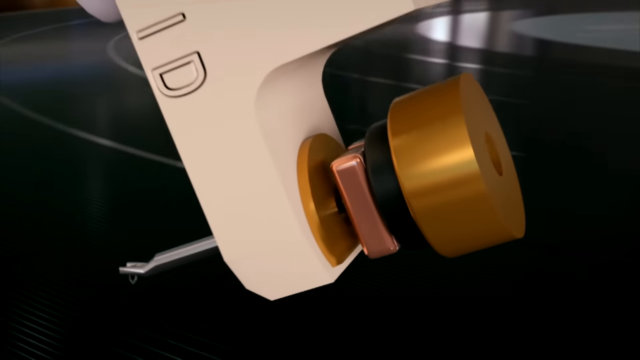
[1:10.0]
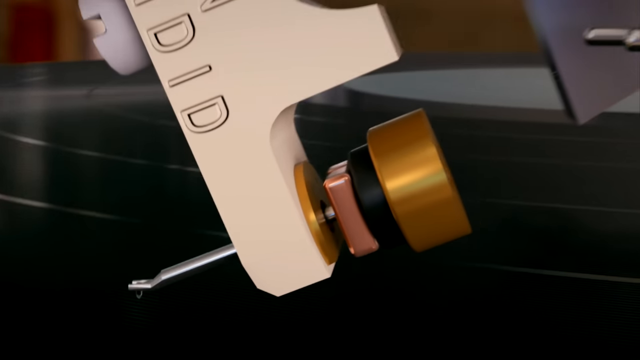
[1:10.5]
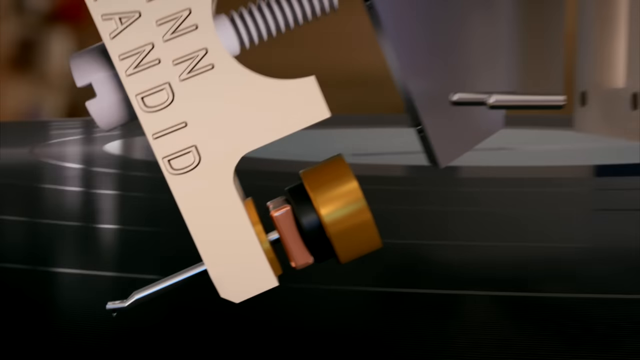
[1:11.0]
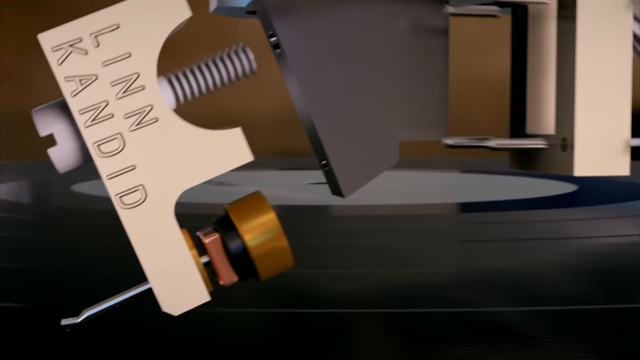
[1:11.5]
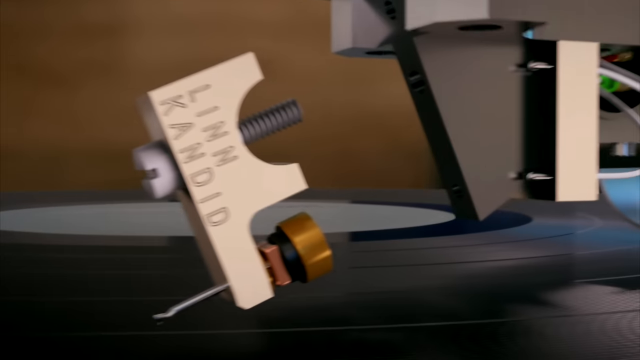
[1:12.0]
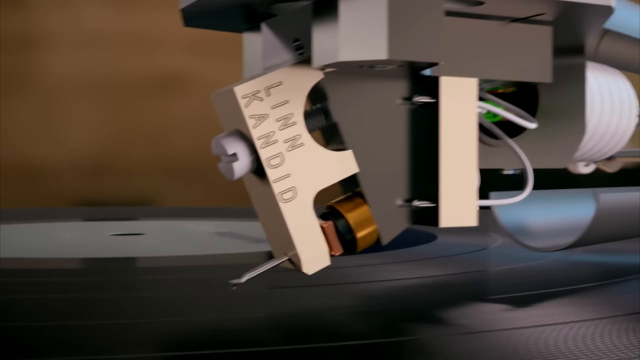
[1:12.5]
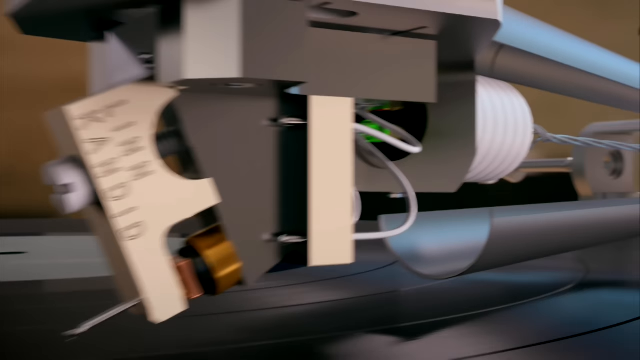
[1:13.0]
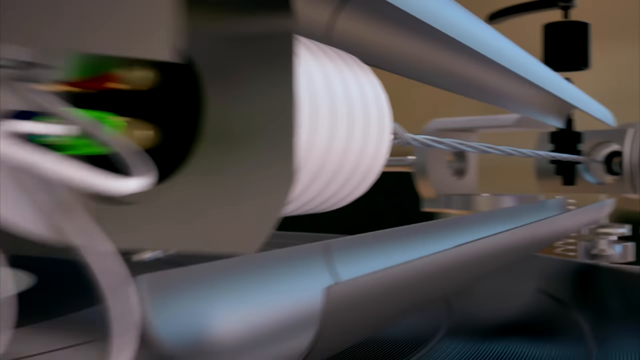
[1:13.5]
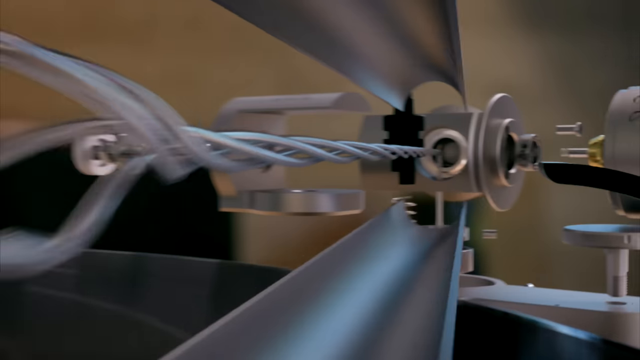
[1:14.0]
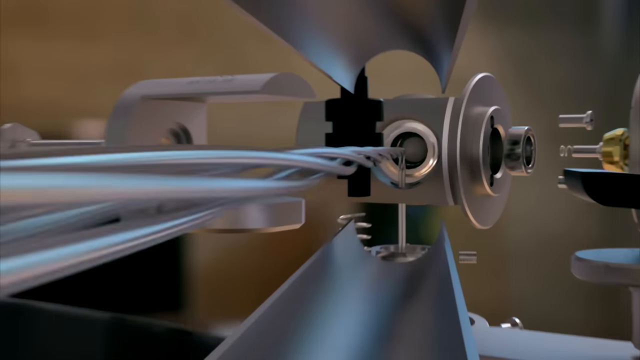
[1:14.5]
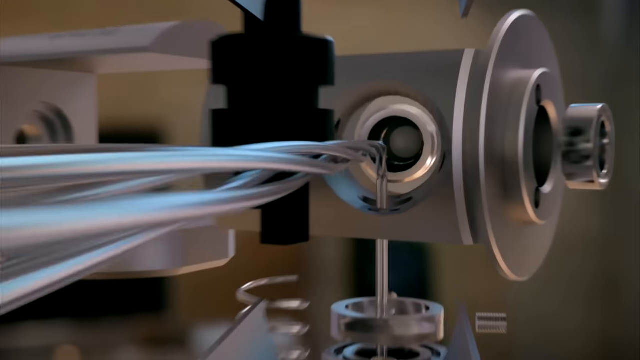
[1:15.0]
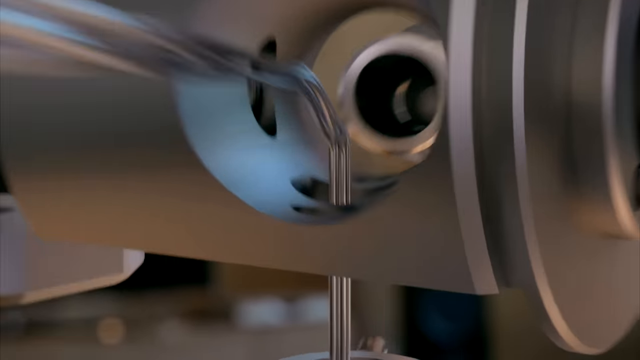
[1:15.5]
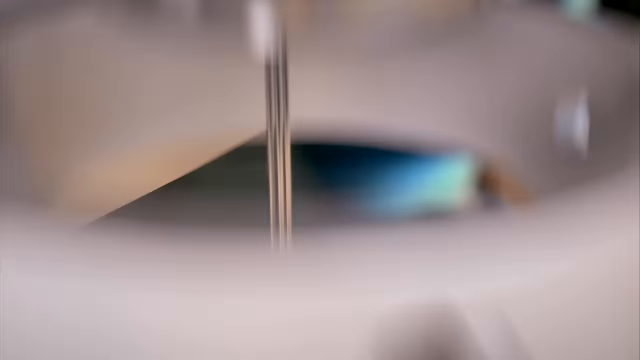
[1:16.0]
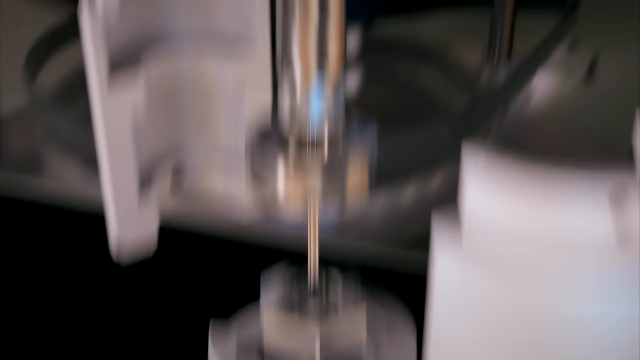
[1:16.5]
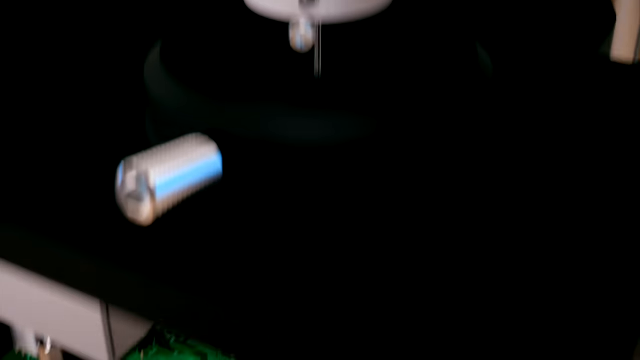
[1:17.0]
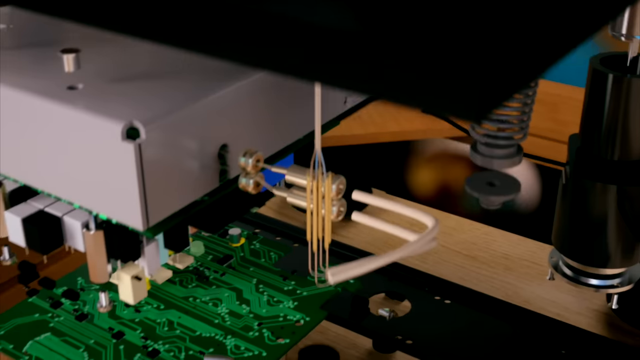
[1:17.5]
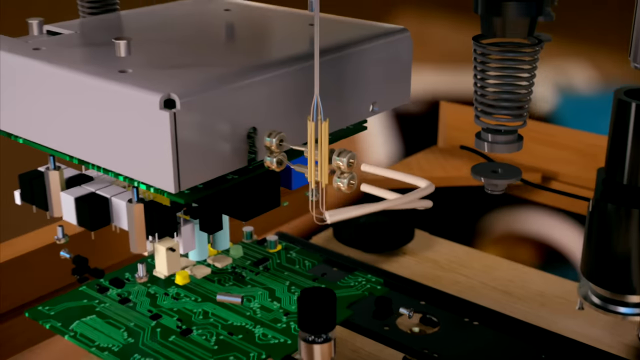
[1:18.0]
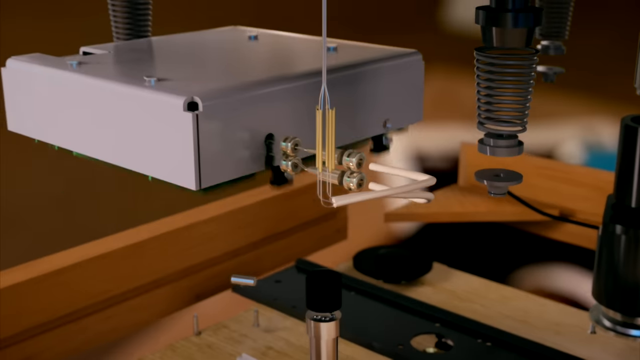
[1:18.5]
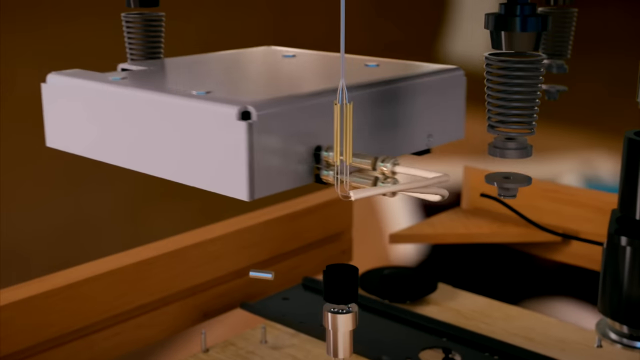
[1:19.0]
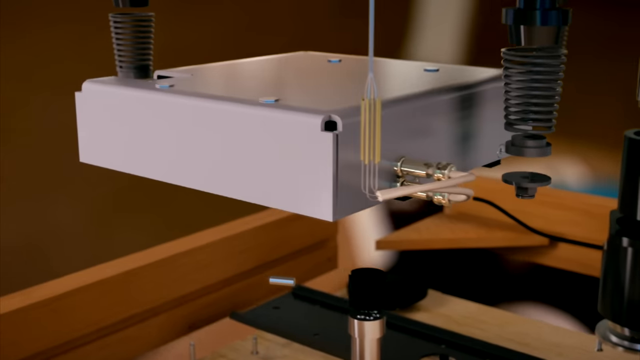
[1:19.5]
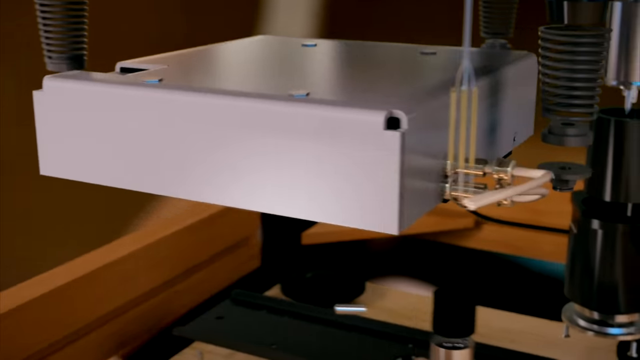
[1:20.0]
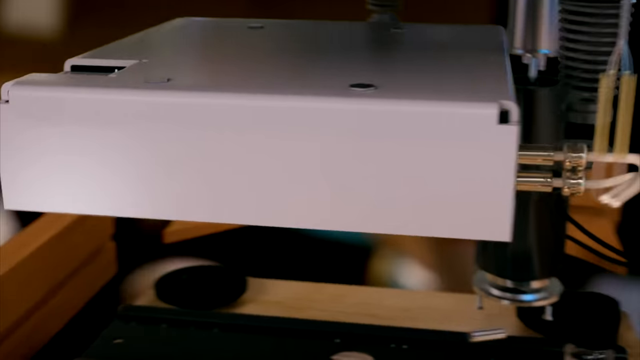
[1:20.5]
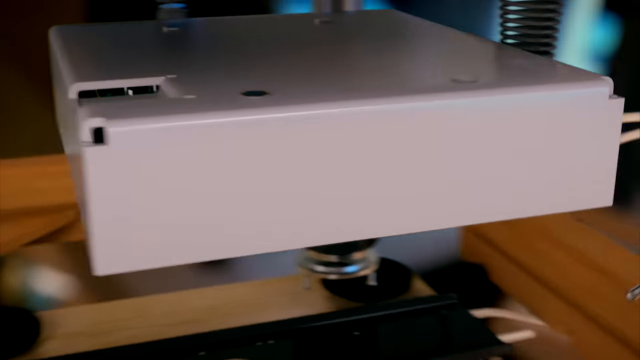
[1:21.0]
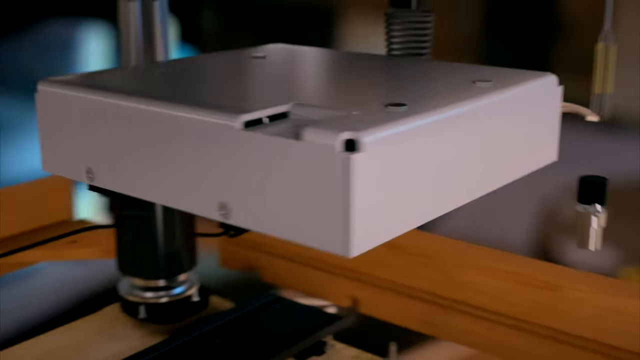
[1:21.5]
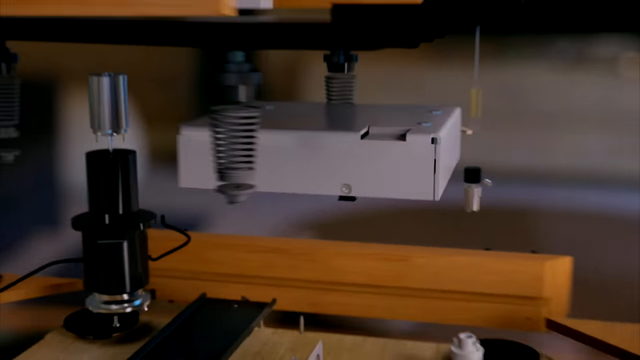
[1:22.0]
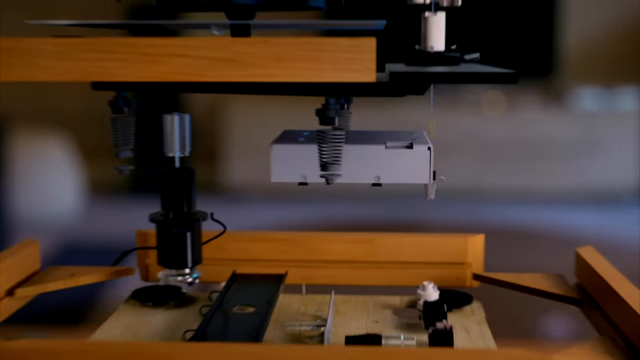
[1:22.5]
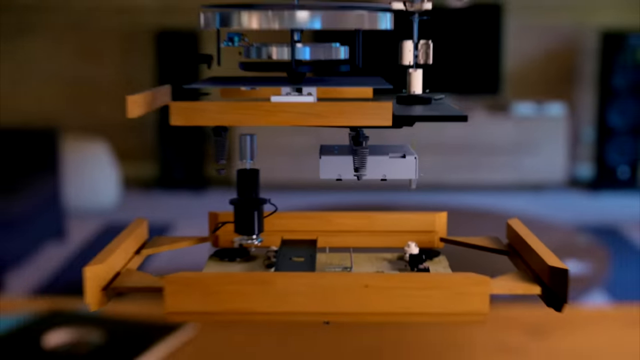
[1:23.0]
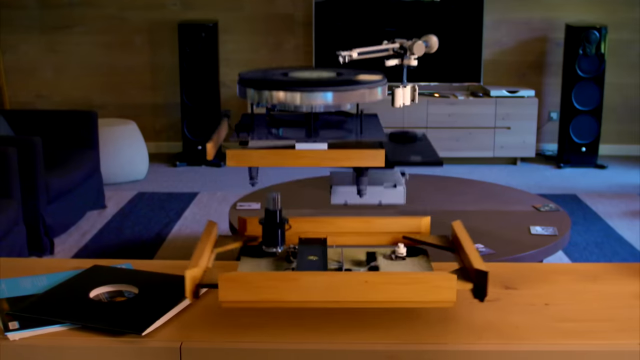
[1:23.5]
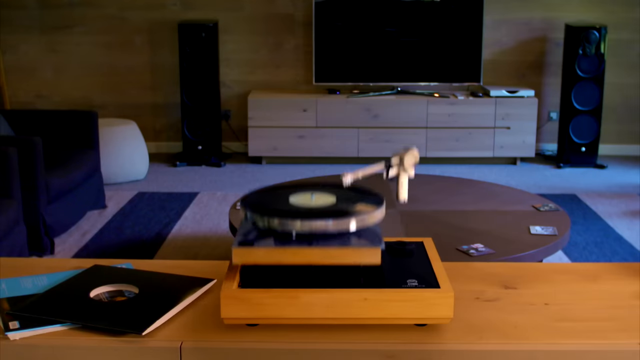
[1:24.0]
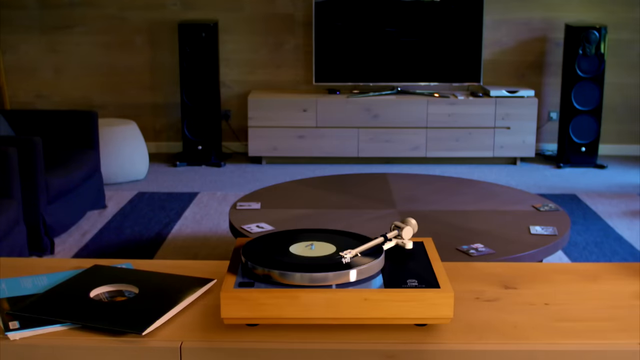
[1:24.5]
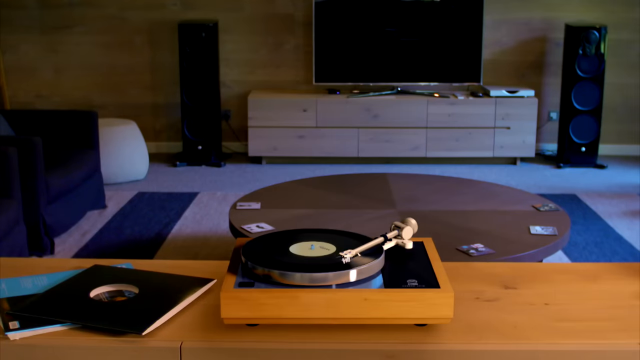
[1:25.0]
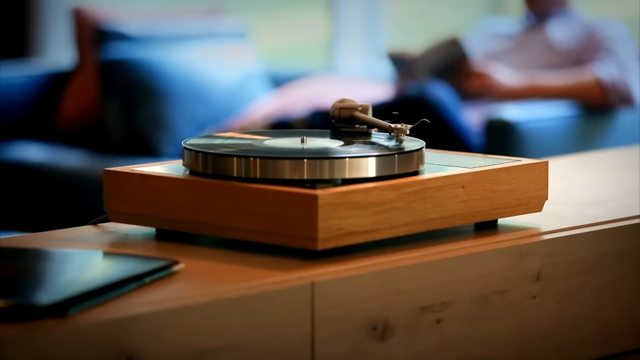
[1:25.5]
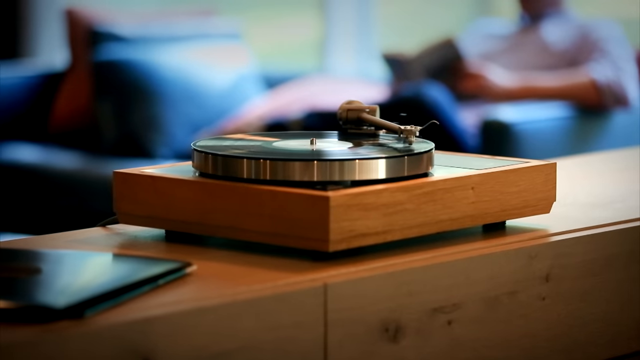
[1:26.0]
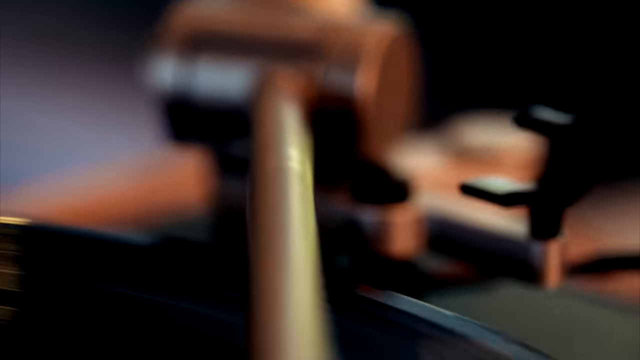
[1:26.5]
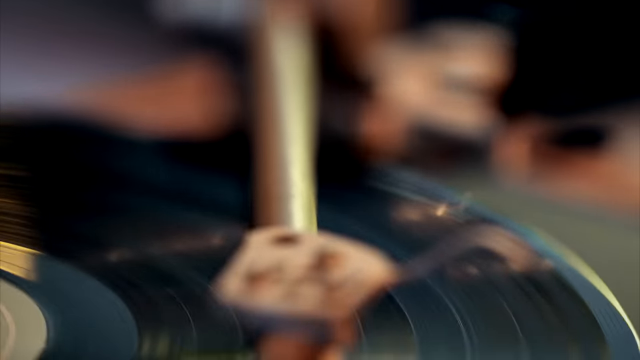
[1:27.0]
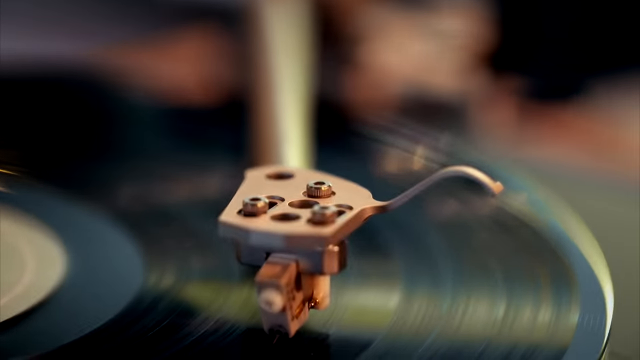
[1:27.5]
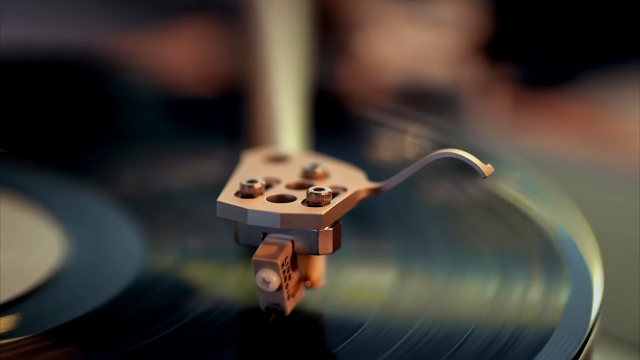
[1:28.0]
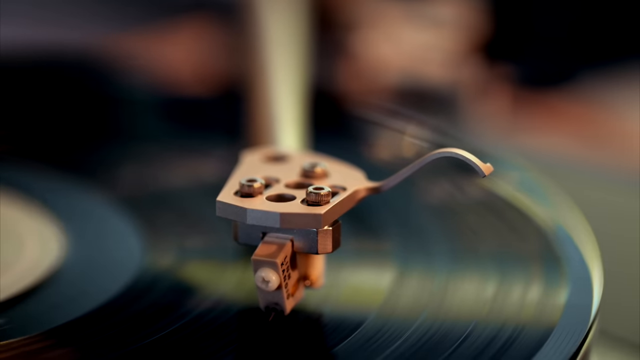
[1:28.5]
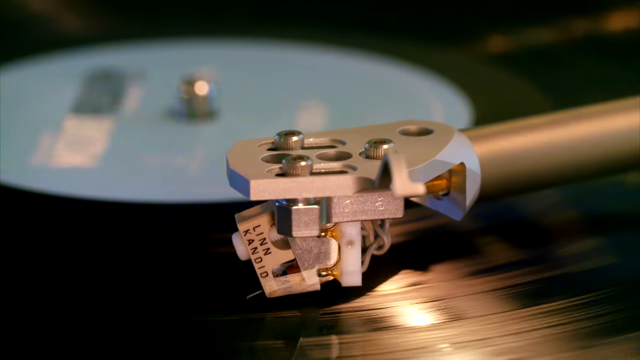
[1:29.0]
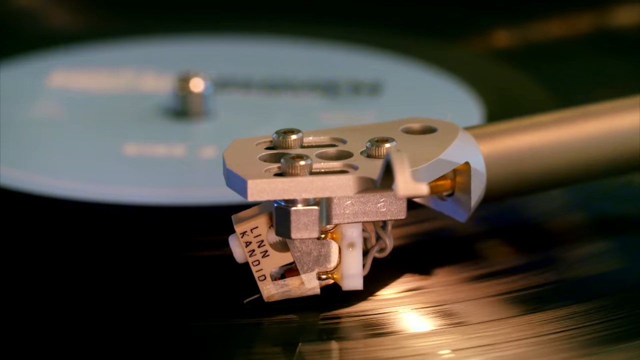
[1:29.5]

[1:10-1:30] The handle of the record player is shown close up again, showing how it works. A cinematic transition then moves around the record player, showing its technology and compartments in detail, with circuit boards and other technology coming together again to build up the record player. The view expands out to a bird's-eye view from the top, showing the record player in its fully built, normal form on top of the counter in the living room. Another cinematic transition moves to the side of the record player, showing the man sitting in the seat, still reading the book. Then there is a close-up of the record player and its handle as it plays normally.